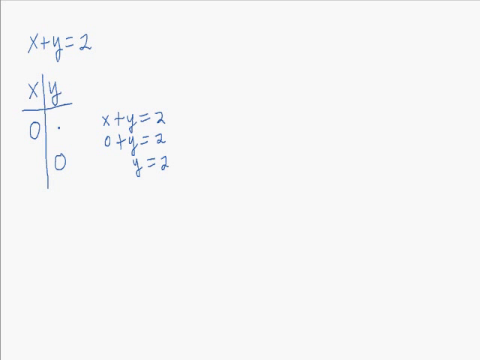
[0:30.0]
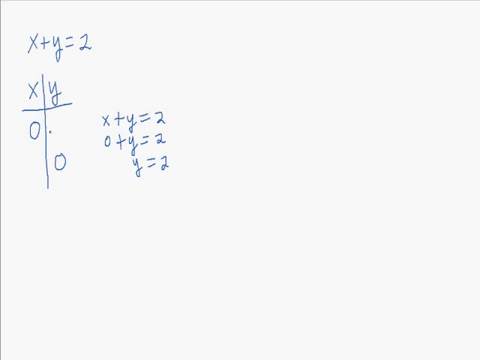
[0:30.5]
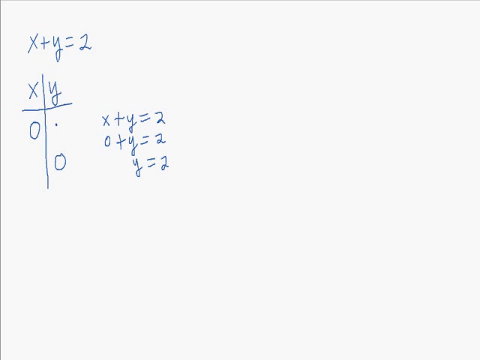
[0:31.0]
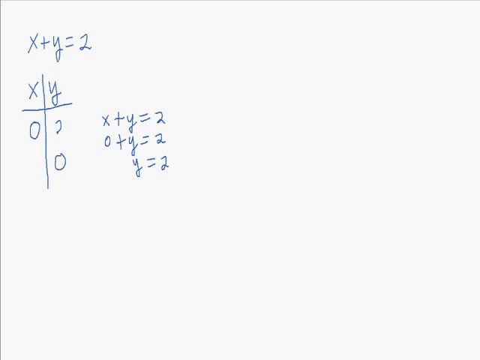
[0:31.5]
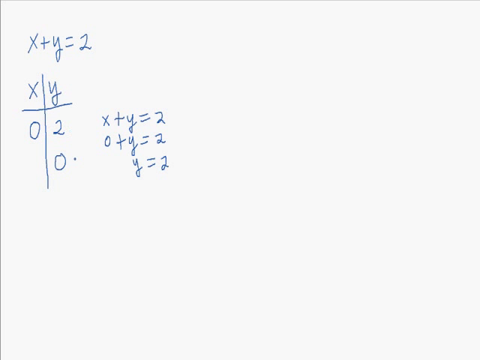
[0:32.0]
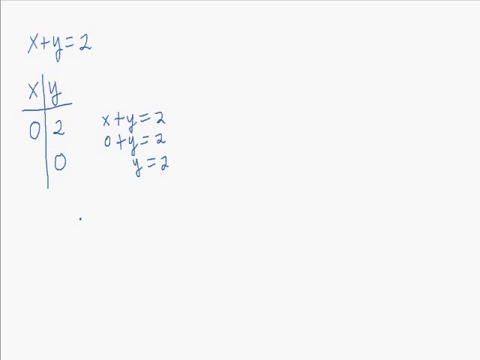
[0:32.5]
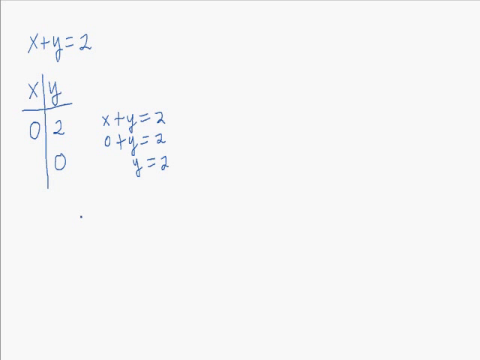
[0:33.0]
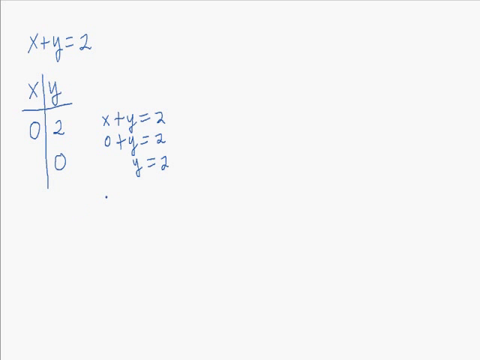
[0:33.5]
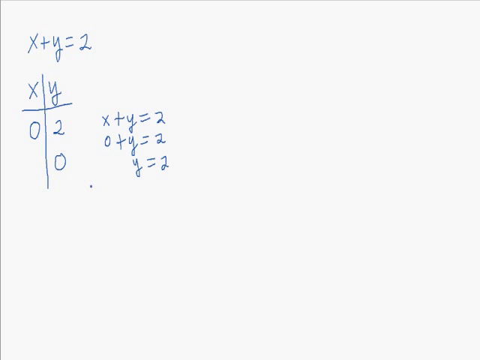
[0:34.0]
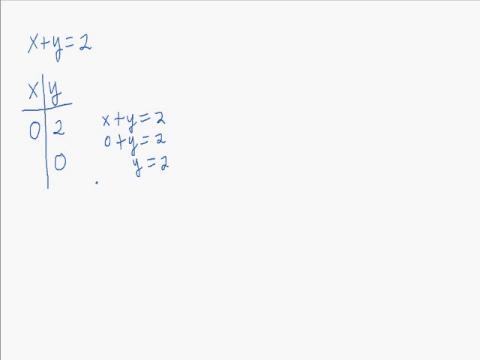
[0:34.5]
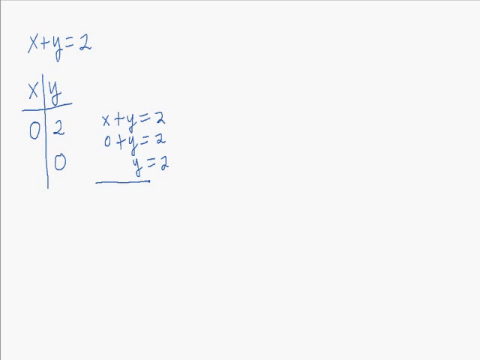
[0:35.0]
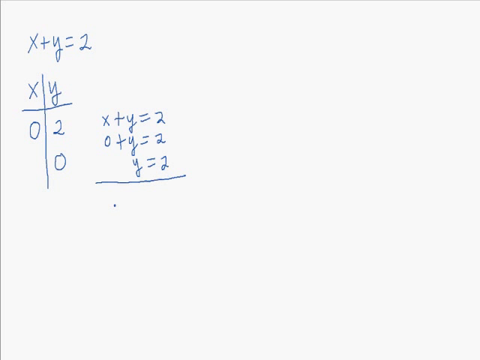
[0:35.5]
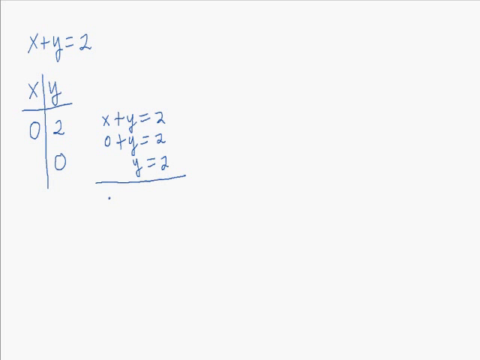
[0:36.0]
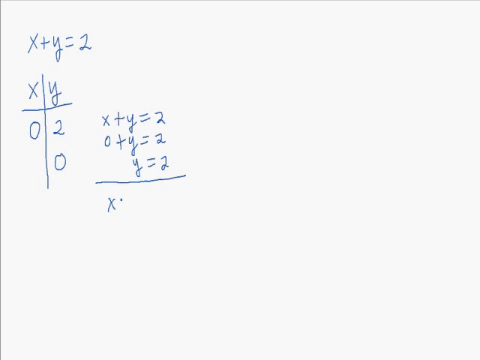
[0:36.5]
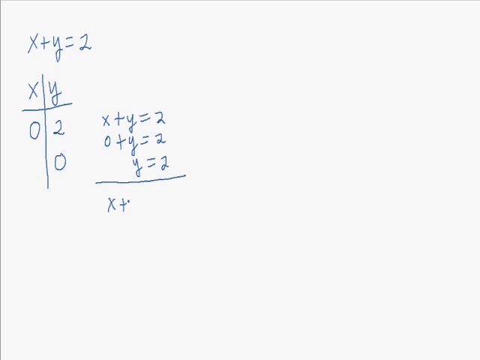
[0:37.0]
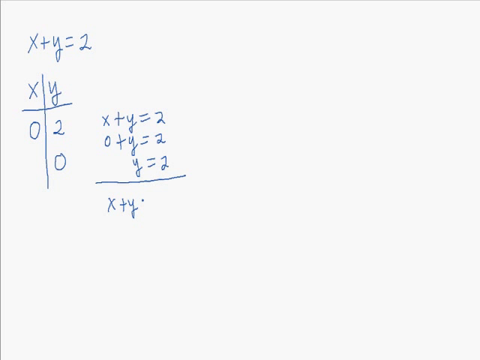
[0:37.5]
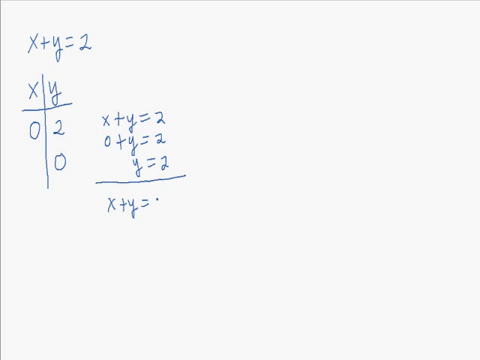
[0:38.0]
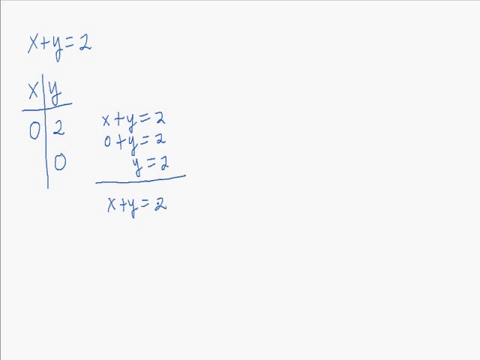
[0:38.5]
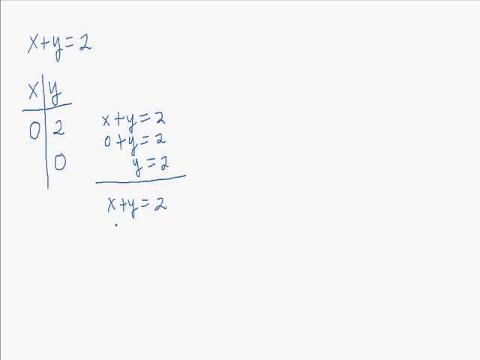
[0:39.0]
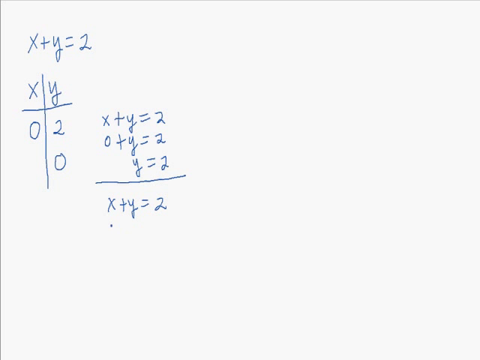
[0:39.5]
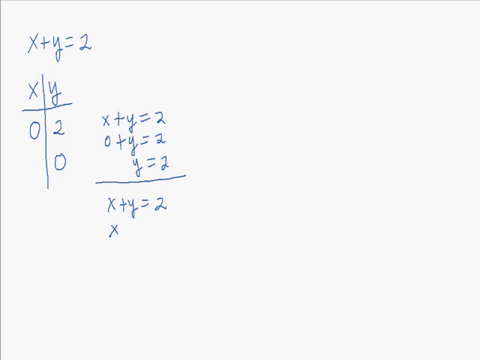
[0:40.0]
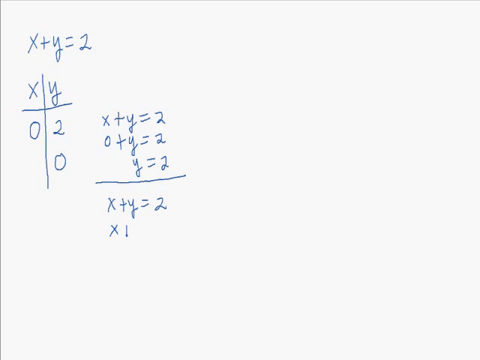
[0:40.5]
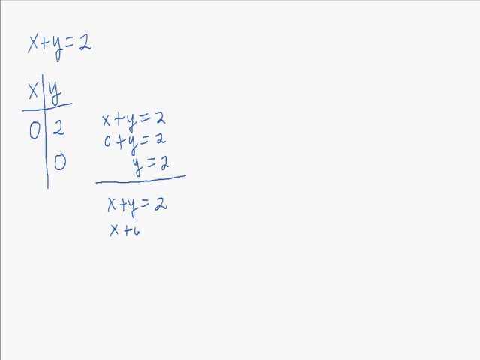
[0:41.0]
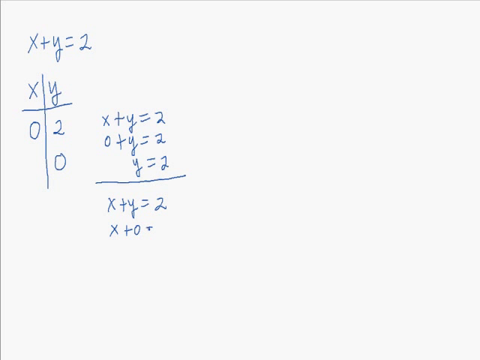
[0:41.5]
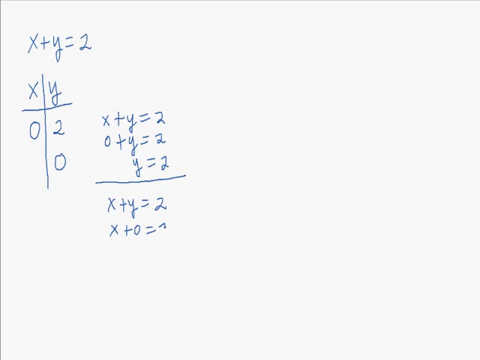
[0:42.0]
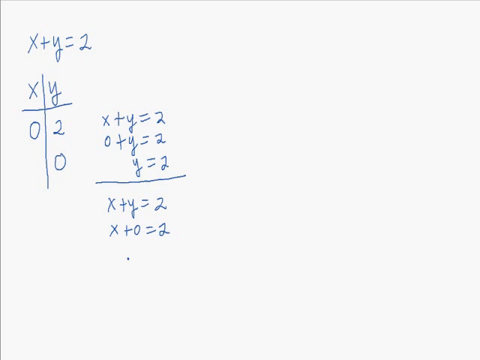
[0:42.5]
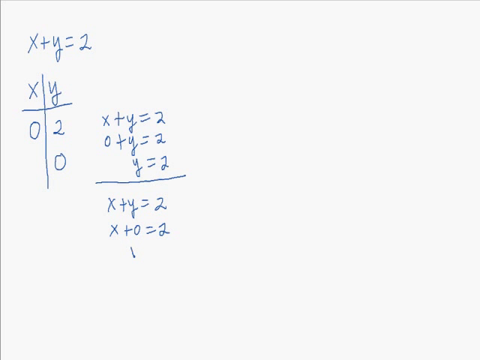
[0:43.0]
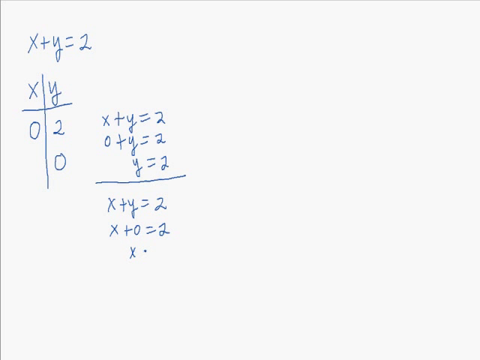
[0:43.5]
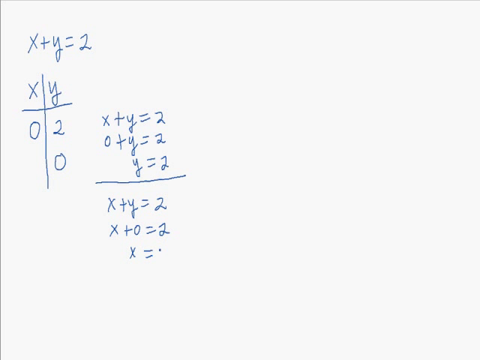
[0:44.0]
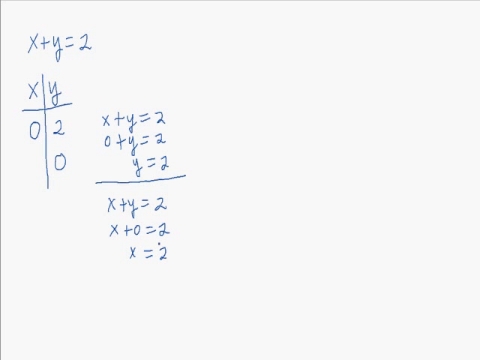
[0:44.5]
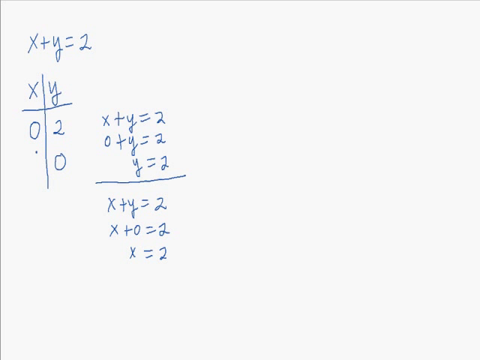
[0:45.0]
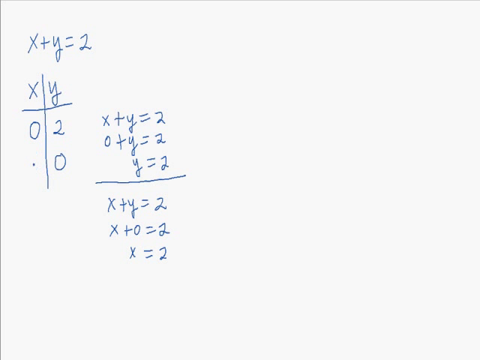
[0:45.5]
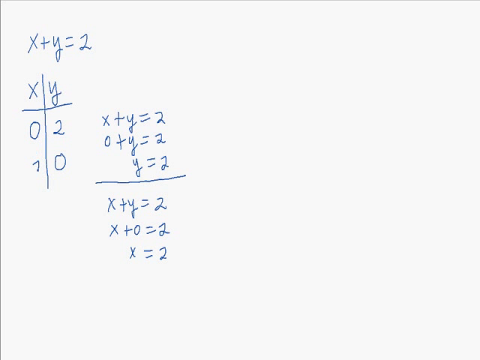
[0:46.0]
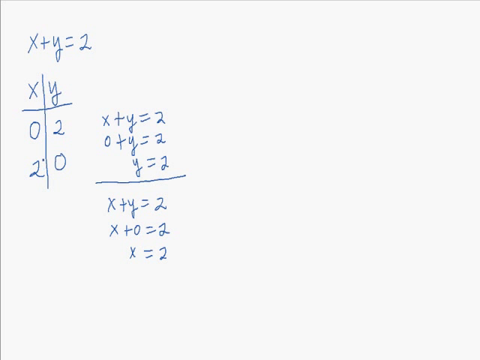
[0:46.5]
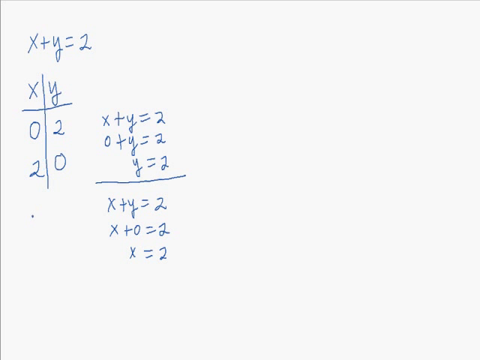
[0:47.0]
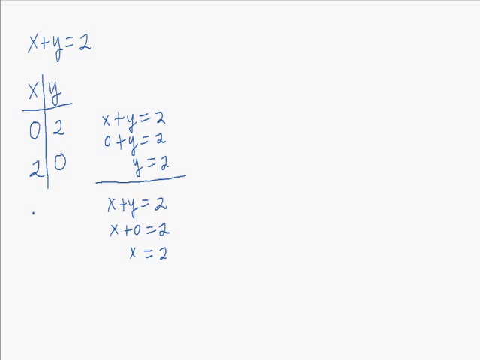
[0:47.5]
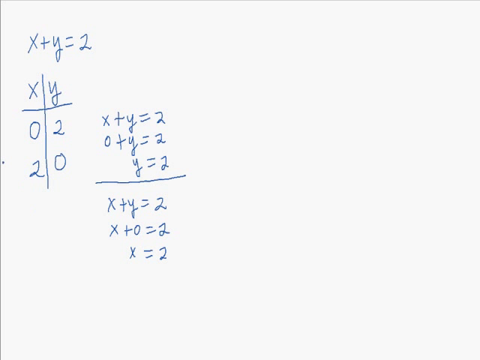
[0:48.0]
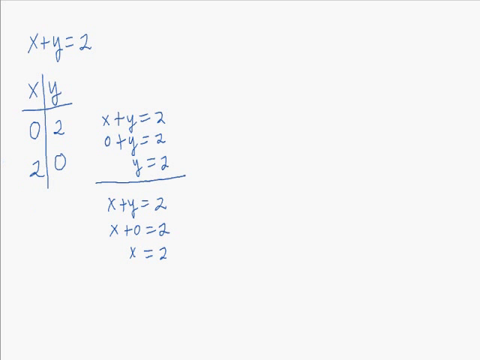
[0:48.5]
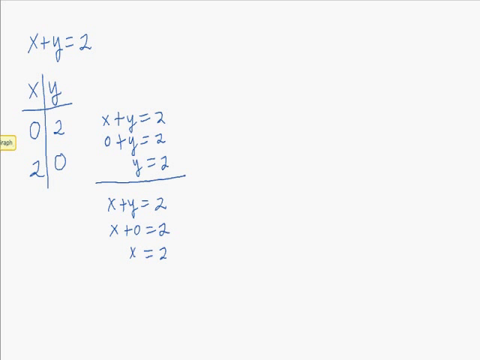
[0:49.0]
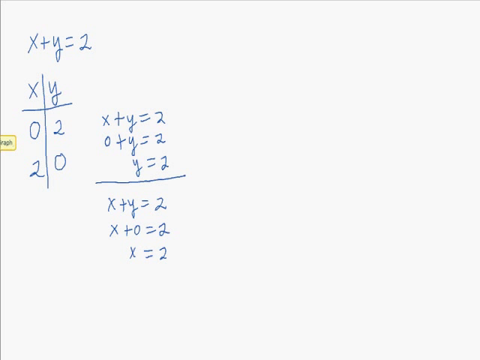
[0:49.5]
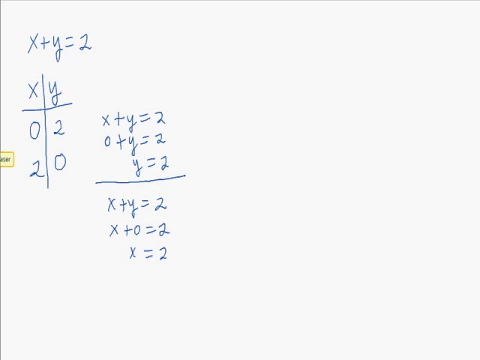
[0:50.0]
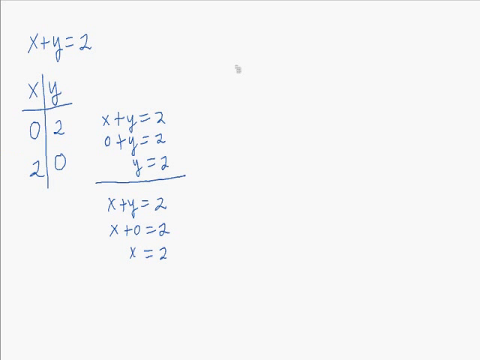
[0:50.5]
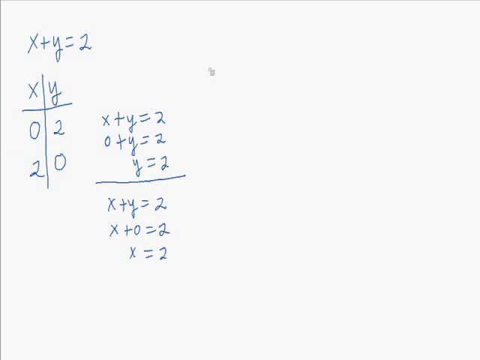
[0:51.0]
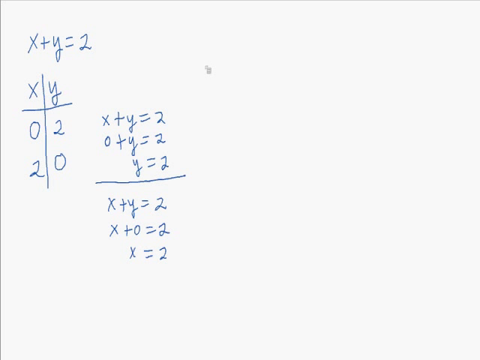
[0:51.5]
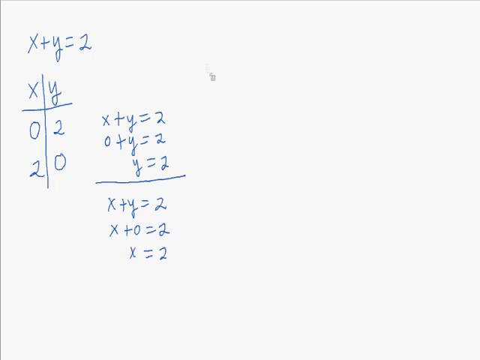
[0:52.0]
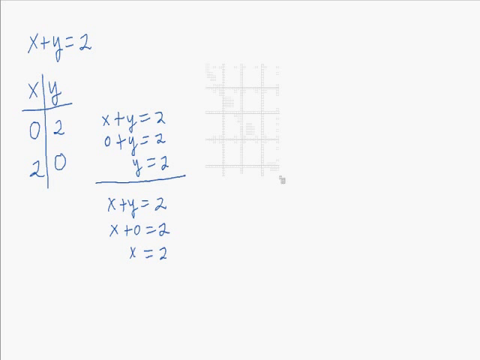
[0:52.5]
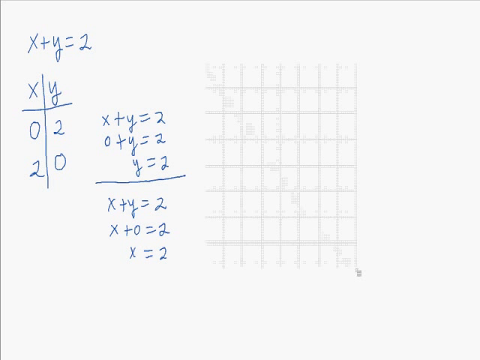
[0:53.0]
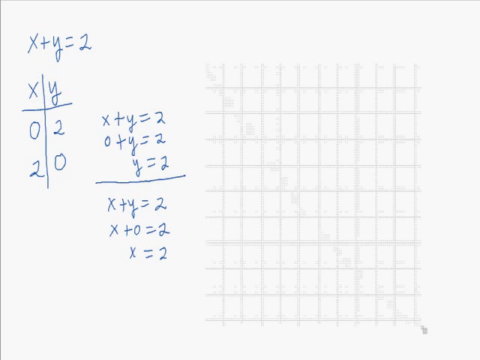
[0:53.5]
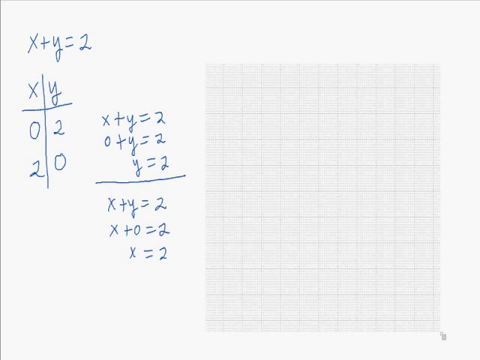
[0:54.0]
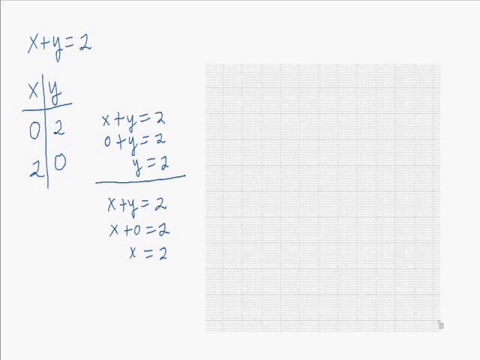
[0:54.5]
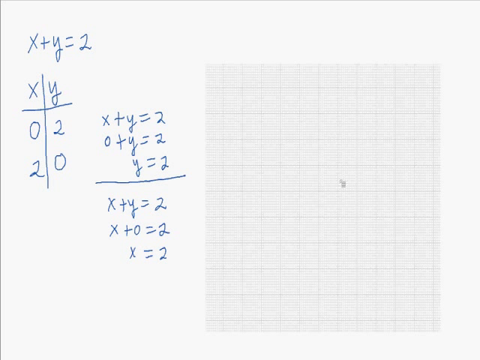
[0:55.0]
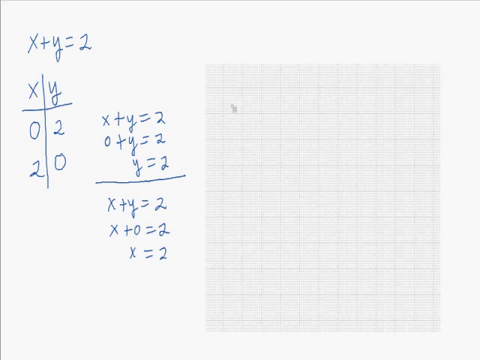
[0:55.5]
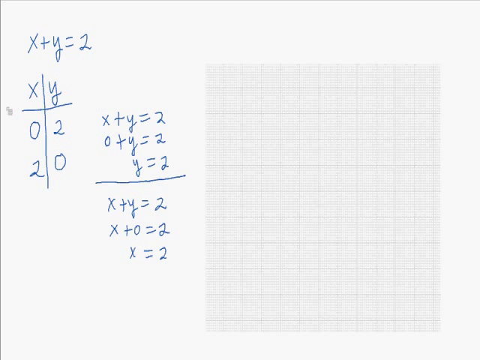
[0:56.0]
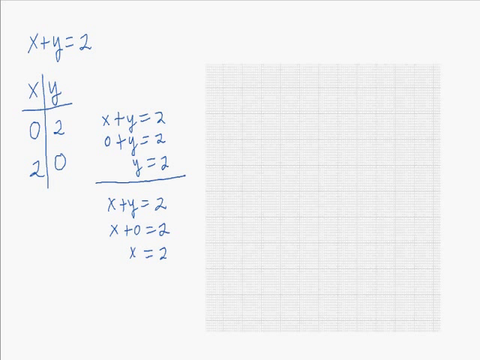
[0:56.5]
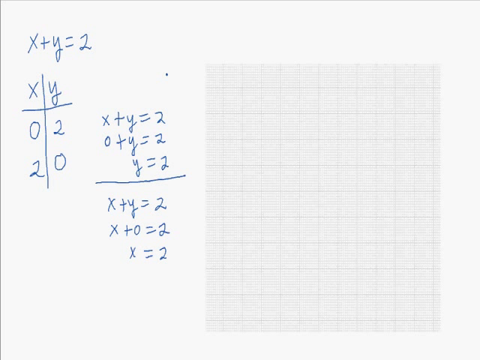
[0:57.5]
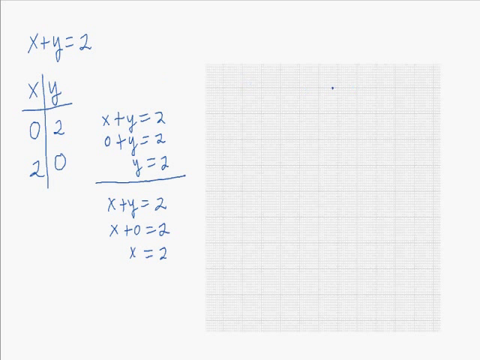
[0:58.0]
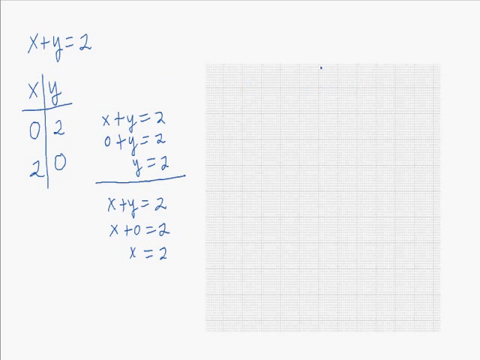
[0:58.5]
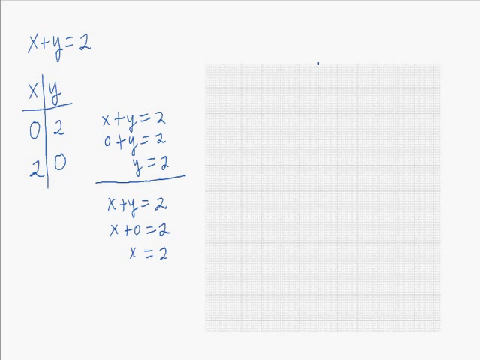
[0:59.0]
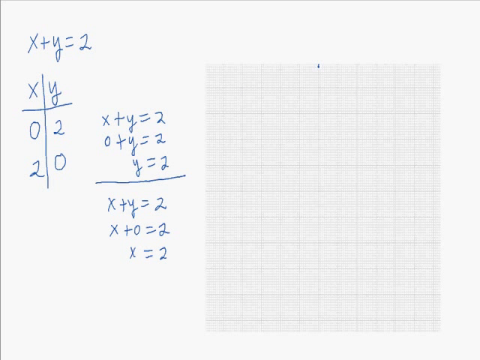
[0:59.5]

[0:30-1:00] A number 2 is written underneath the Y in the XY table, so there is a 0 on the left, a 2 on the right, and a 0 underneath that 2. A line is drawn under the answer "Y = 2", underlining that whole section. Underneath, "X + Y = 2" is written, then "X + 0 = 2", then "X = 2". A 2 is then written in the table underneath the 0 on the left, so there is 0, 2 under X and 2, 0 under Y. The dot moves to the right side, and a grid shows up: an upright, extended rectangle with a grid design and a little light gray in the background. When the grid is first created, instead of the dot, a little gray icon goes up to the upper left corner and is kind of dragged to create the grid space. The blue dot then goes to the center top of the grid and draws a straight vertical line down.